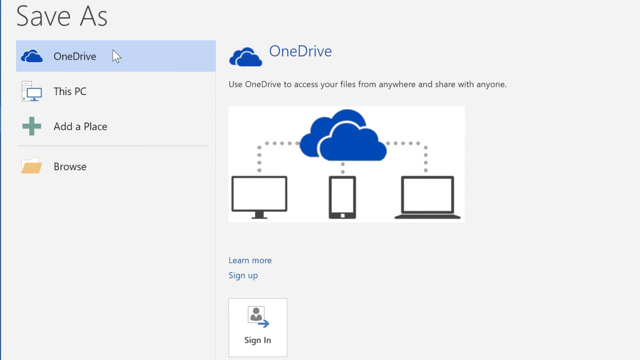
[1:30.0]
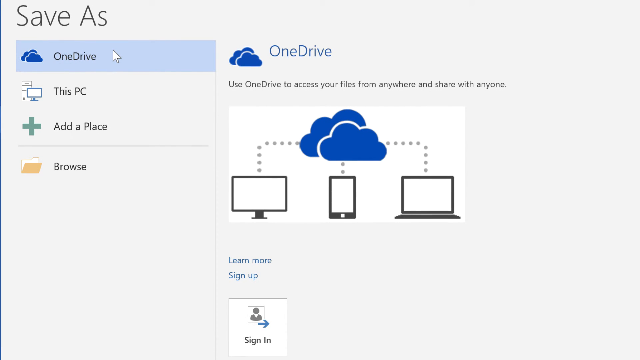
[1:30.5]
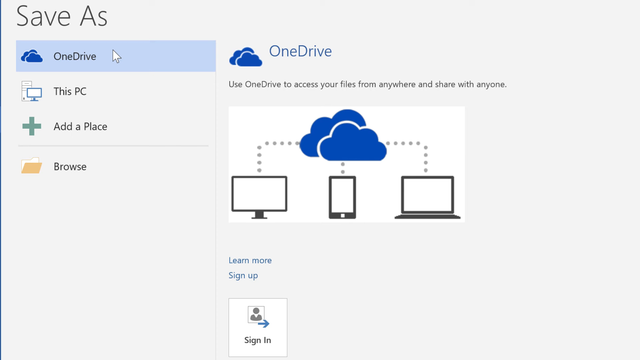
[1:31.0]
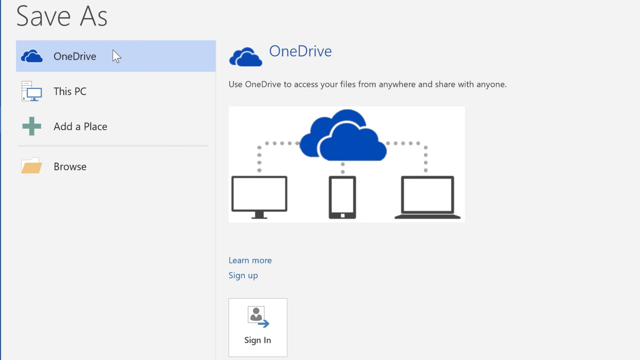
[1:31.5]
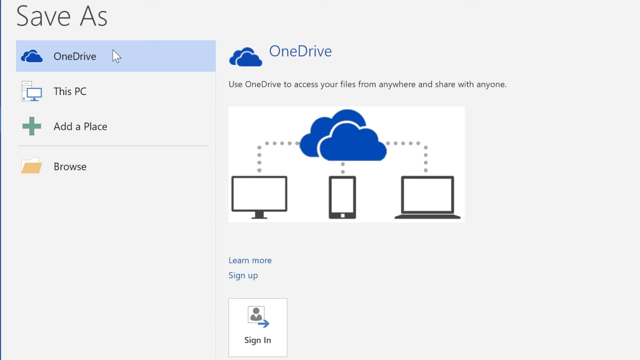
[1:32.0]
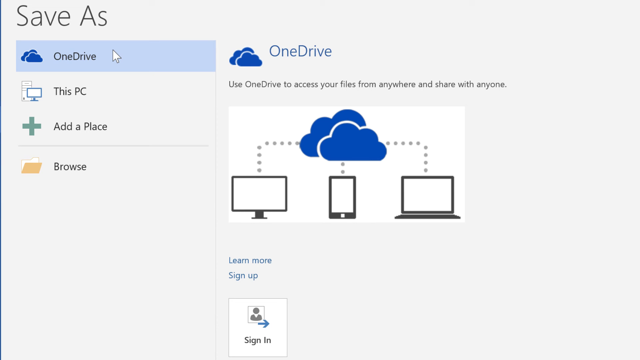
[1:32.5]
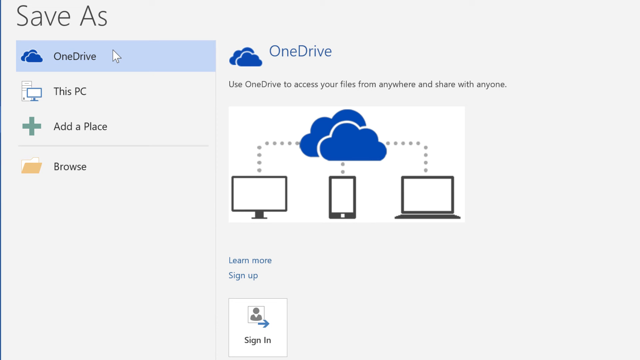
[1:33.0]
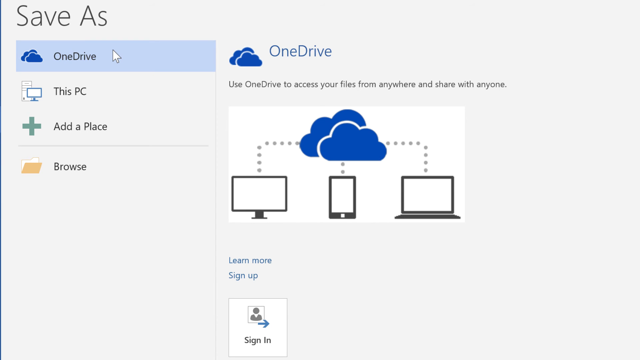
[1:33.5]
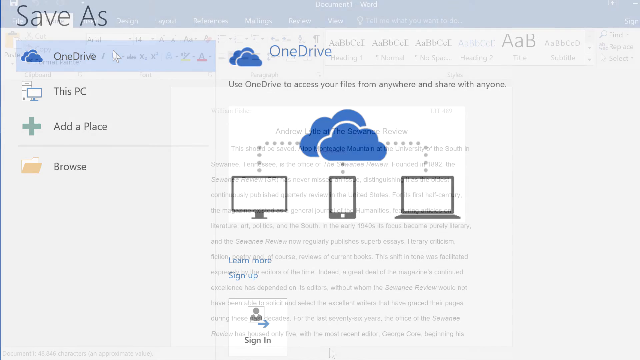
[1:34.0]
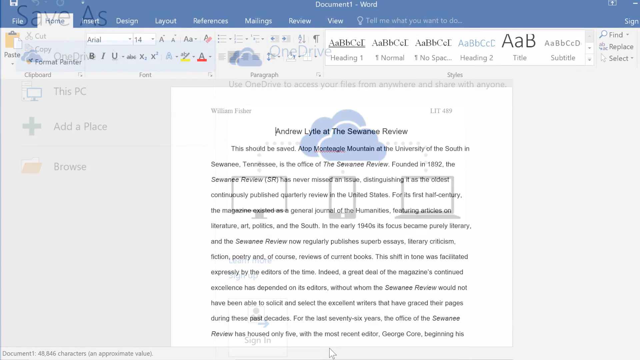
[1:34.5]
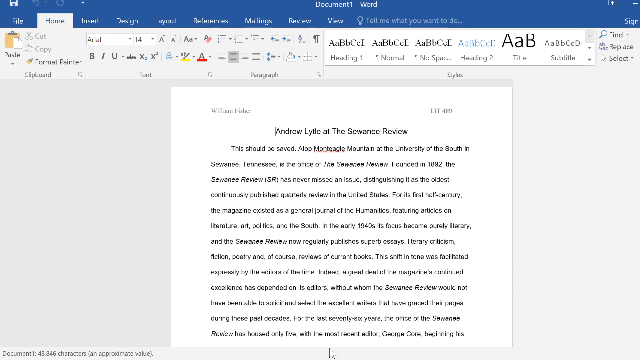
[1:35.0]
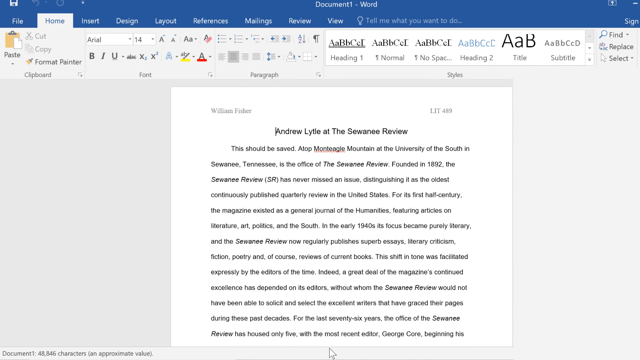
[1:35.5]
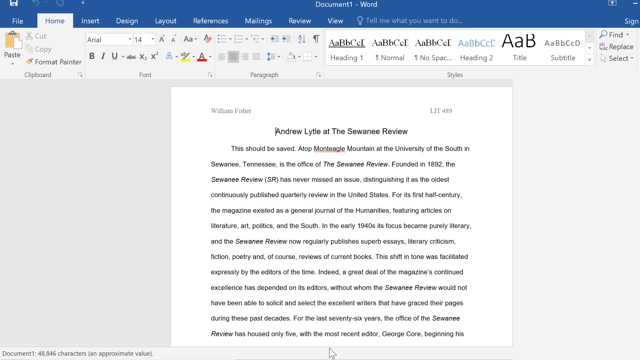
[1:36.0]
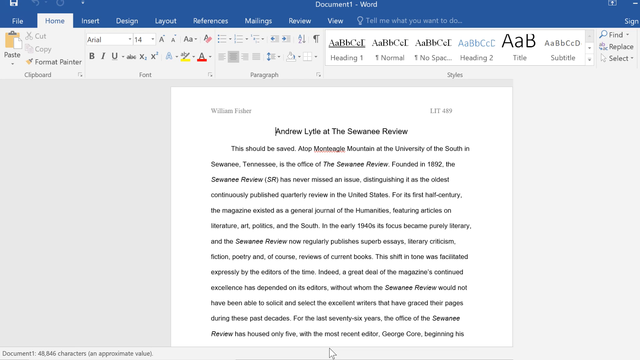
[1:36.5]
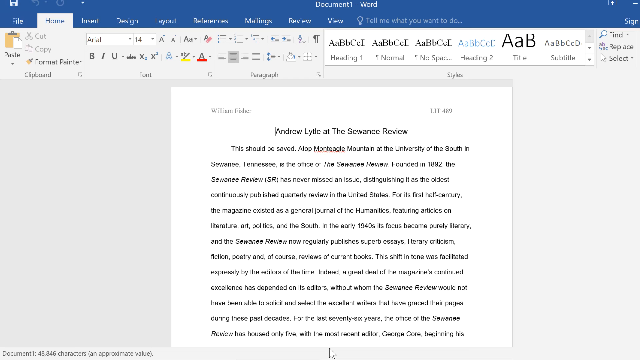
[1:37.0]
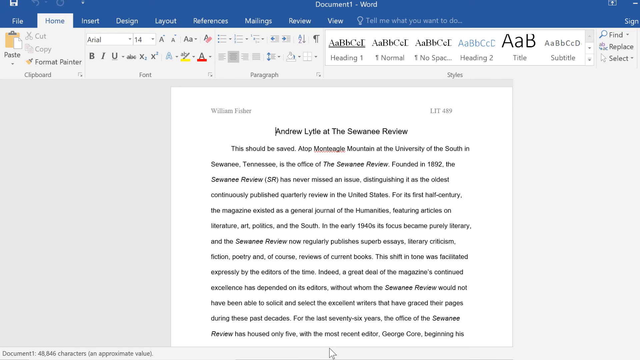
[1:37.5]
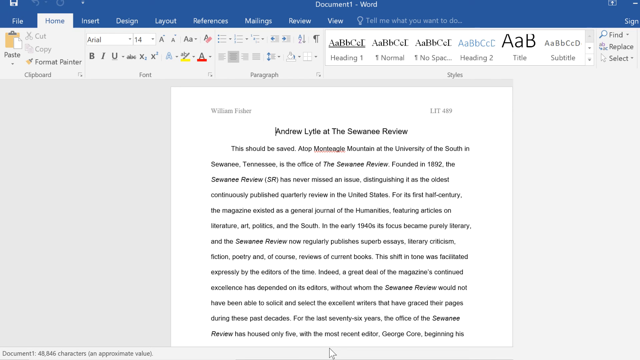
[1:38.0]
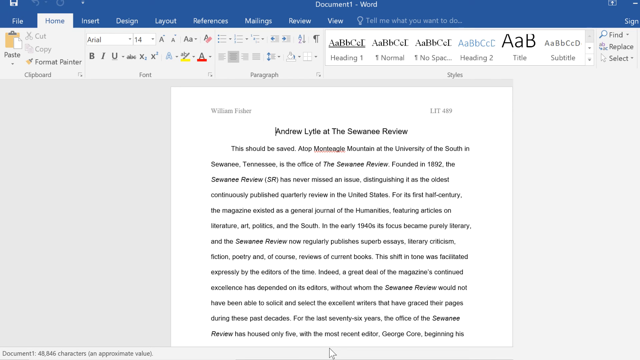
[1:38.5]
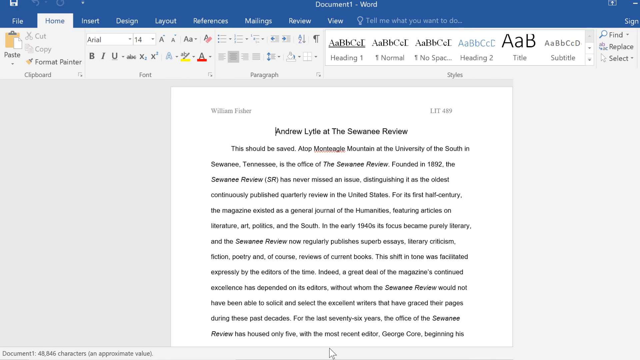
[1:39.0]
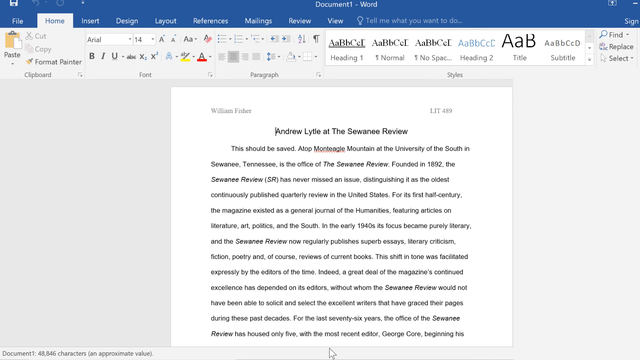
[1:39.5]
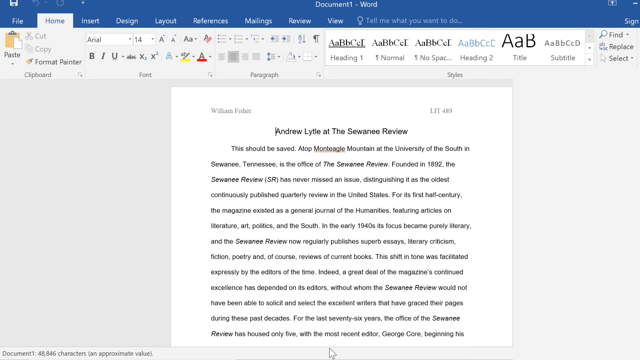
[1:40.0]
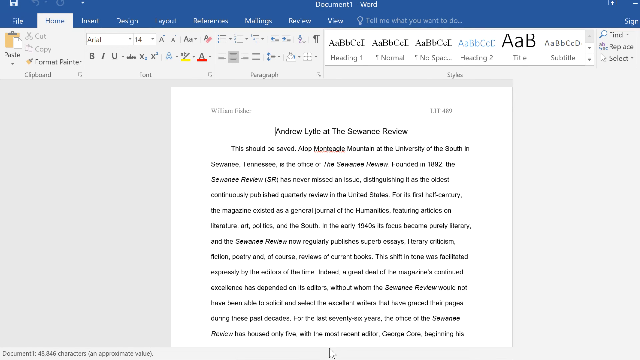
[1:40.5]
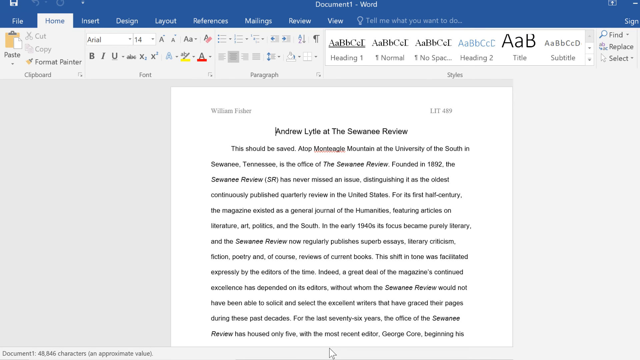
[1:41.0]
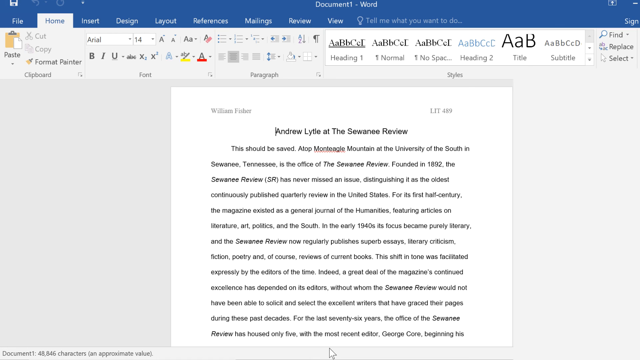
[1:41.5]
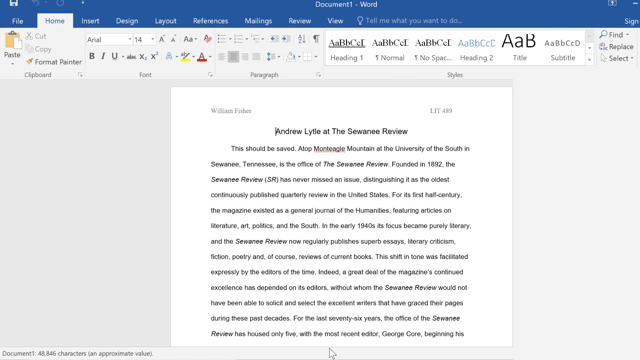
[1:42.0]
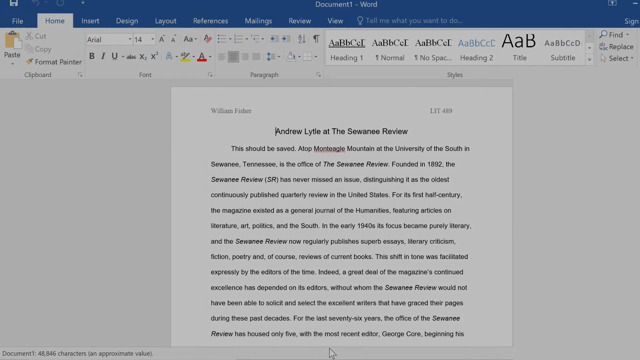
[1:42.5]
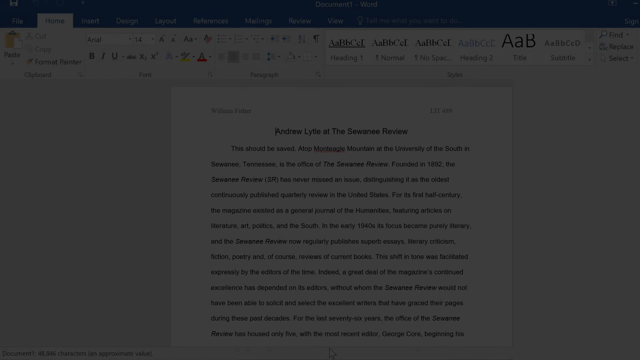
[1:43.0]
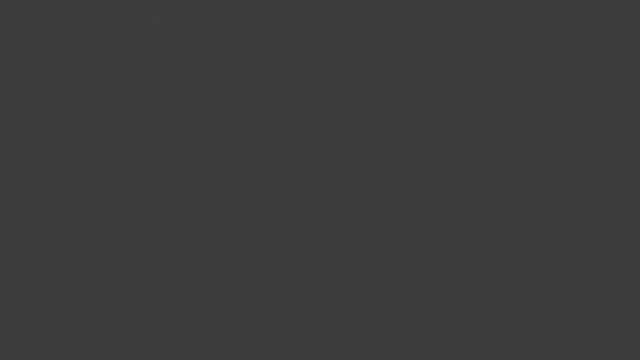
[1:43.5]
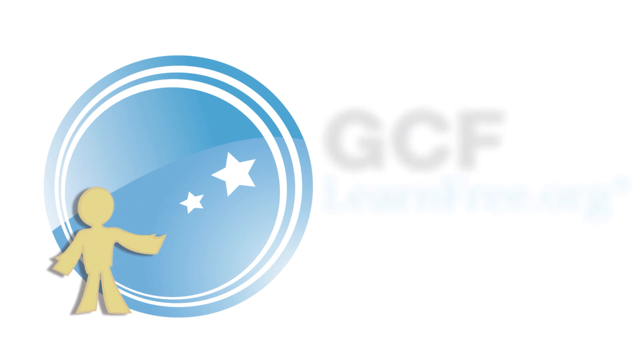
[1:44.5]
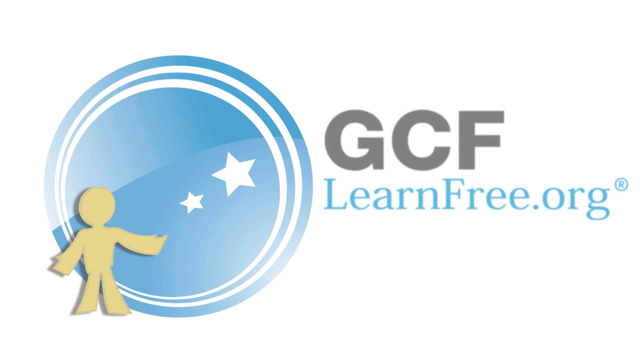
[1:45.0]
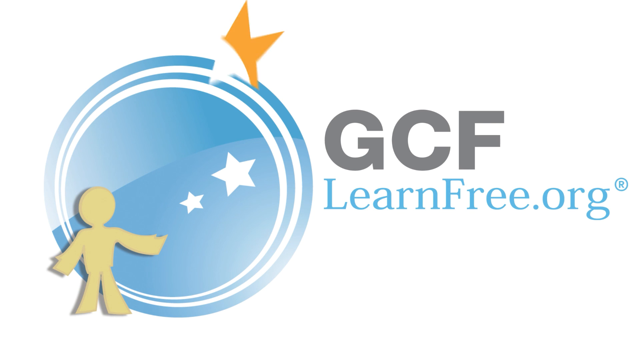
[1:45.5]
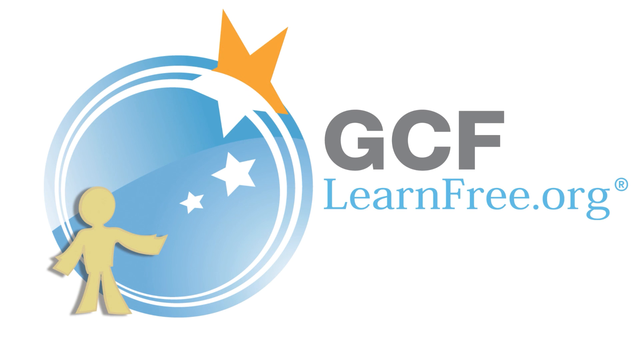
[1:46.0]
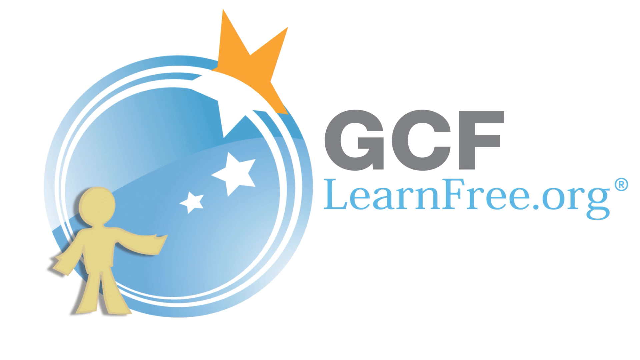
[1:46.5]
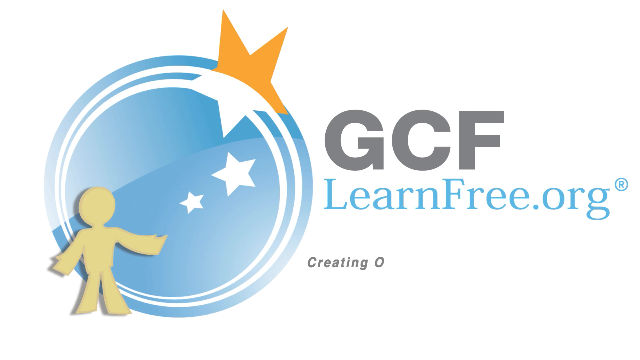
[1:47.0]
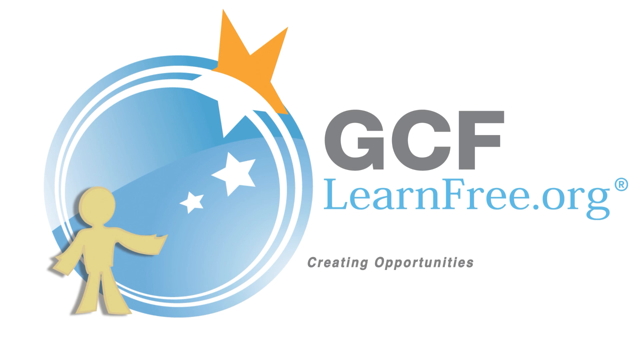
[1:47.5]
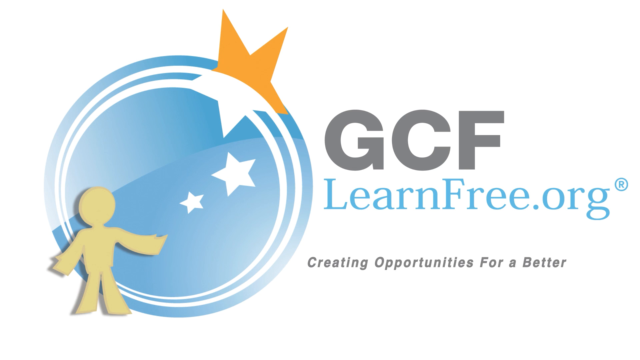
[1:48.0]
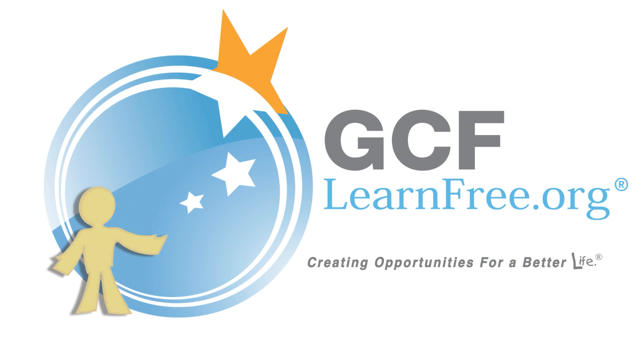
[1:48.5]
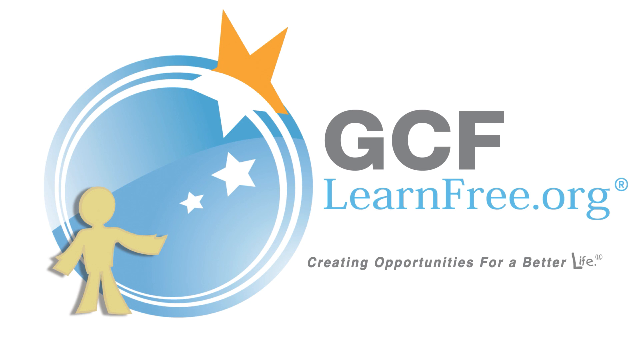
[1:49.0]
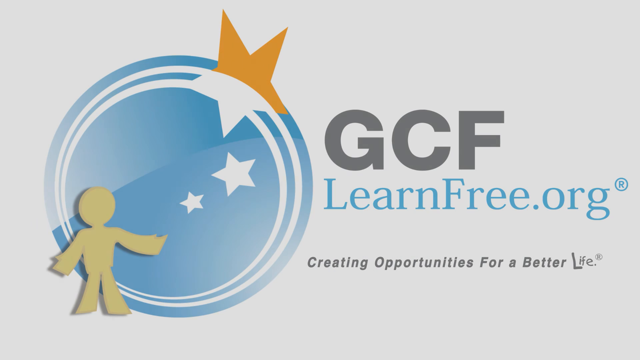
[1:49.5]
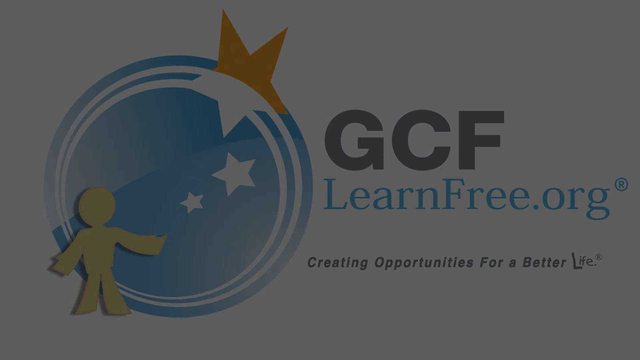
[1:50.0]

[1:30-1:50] Word is on the Save As page, with the options OneDrive, This PC, Add a Place and Browse. OneDrive is highlighted and the cursor is over it, as if the user is about to click it, but they do not. Instead the screen goes back to the document, which is labeled only Document 1. The screen then transitions to a logo reading "GCF" in gray capital letters, followed by "learnfree.org." To the left of the lettering is a blue circle that almost looks like a bubble, the Earth or the sky. Inside the circle, right at its circumference, are two white outline-like lines, and there are two white stars inside the blue circle. A bigger star is half white, with the white half intersecting the outline lines, and half orange, with the orange half lying outside the circle. A small stick-figure-like person inside seems to be looking up at the stars. Text beneath reads "creating opportunities for a better life."